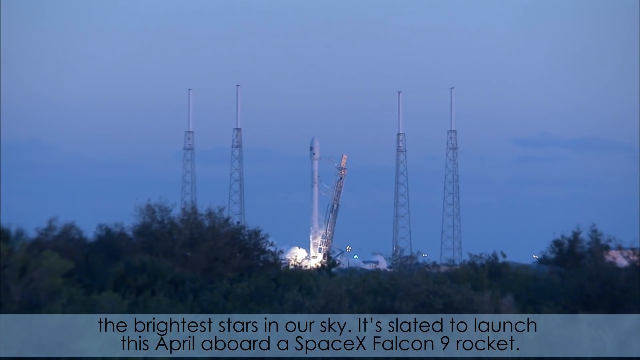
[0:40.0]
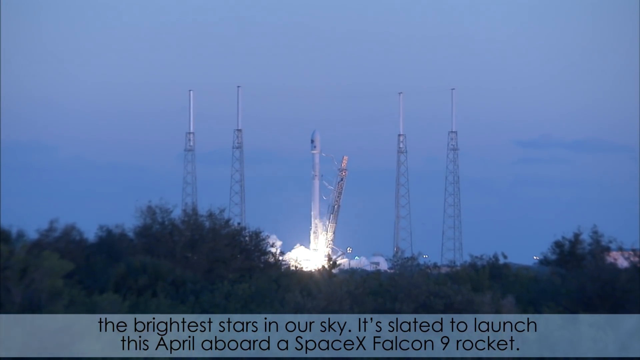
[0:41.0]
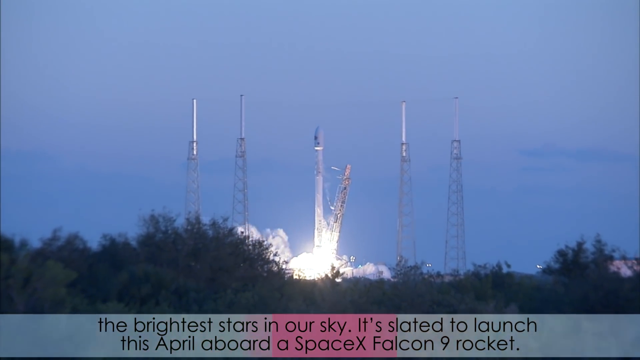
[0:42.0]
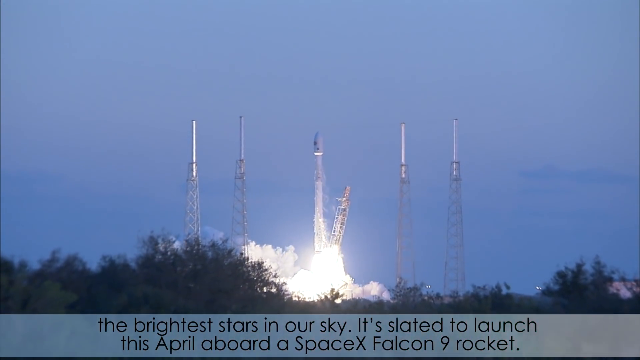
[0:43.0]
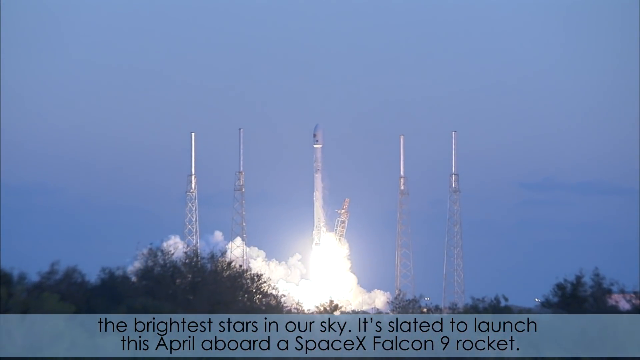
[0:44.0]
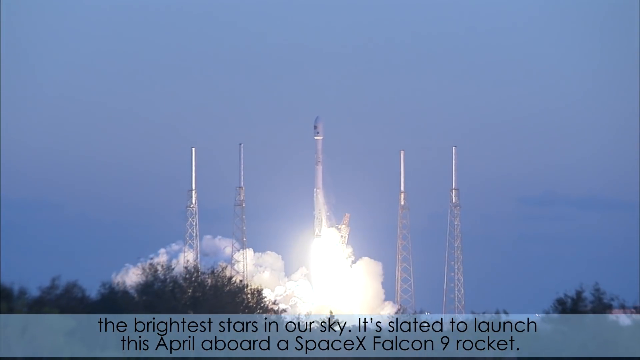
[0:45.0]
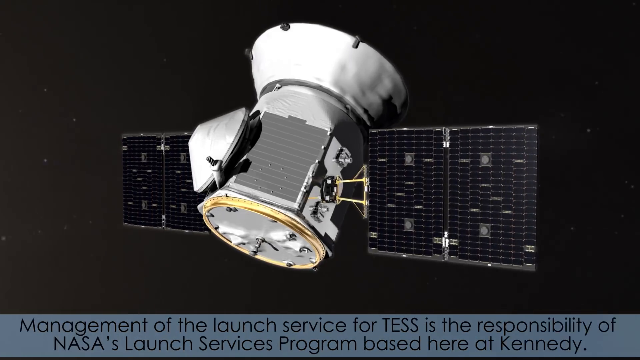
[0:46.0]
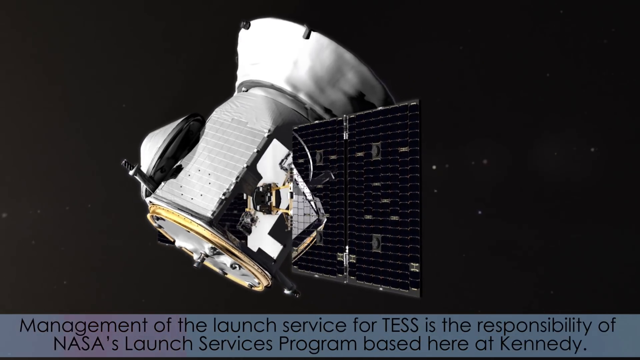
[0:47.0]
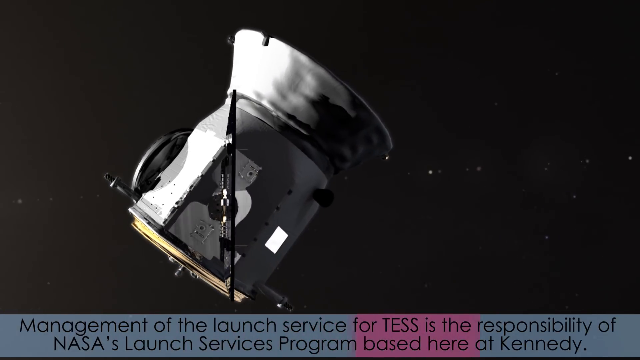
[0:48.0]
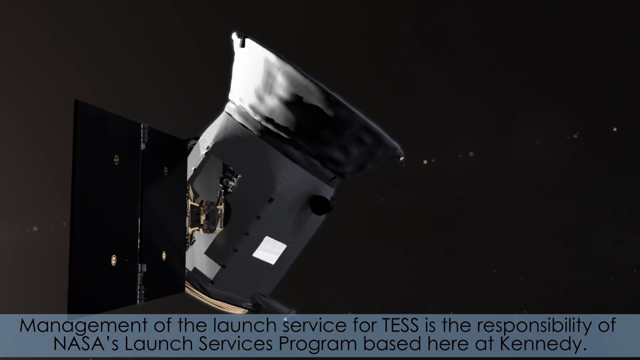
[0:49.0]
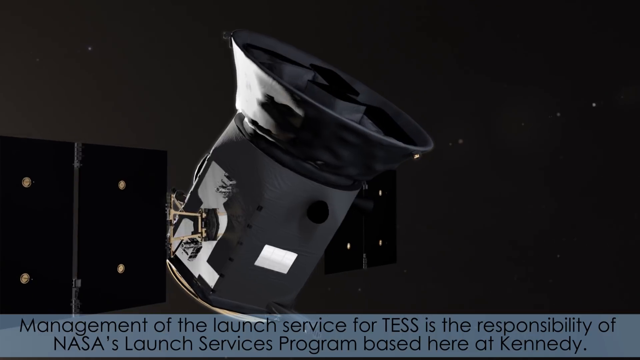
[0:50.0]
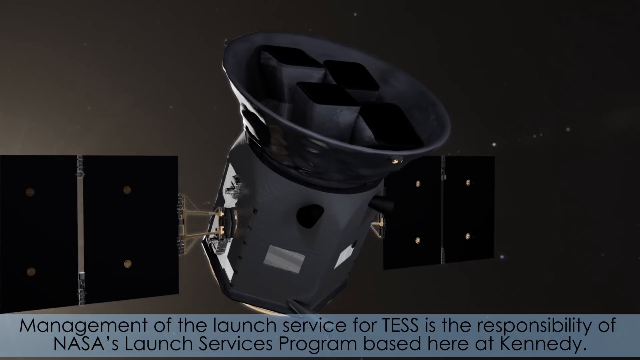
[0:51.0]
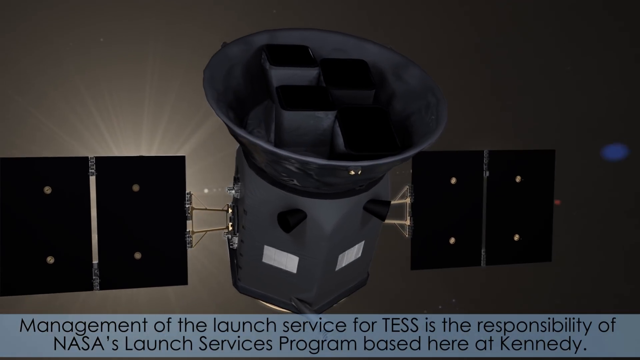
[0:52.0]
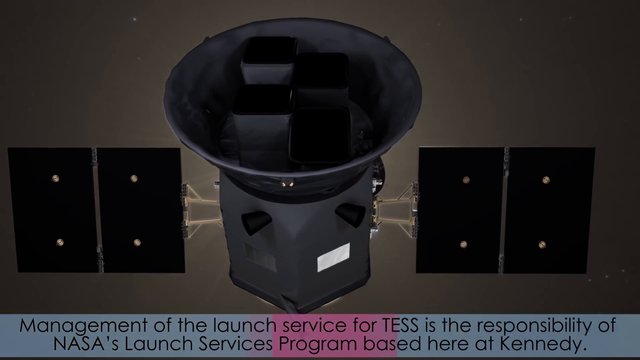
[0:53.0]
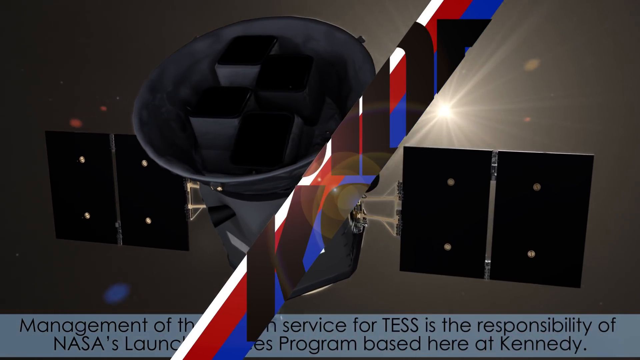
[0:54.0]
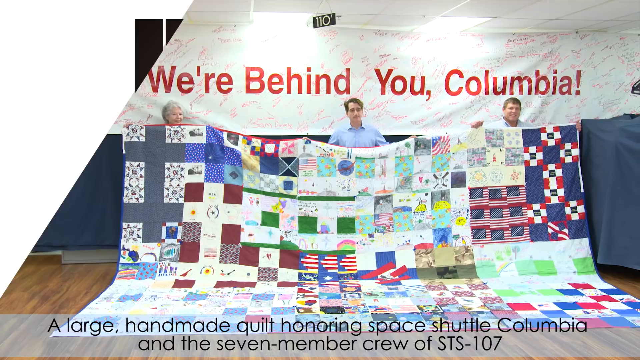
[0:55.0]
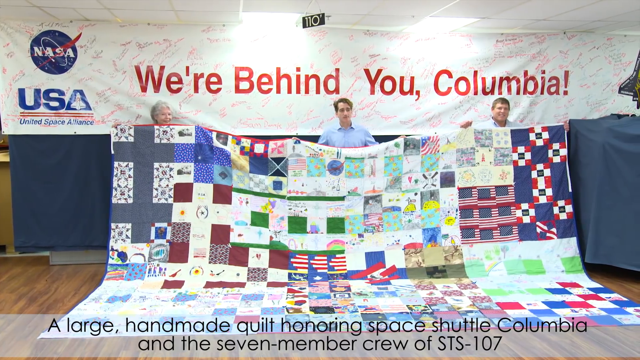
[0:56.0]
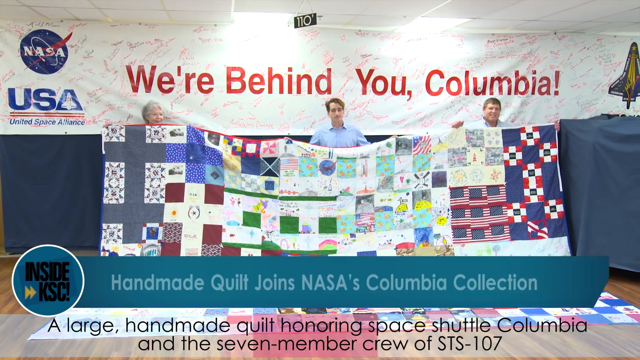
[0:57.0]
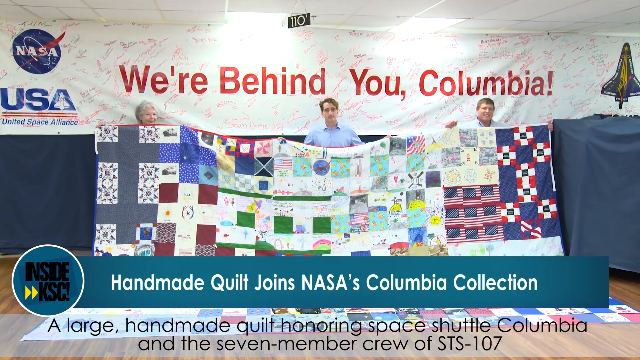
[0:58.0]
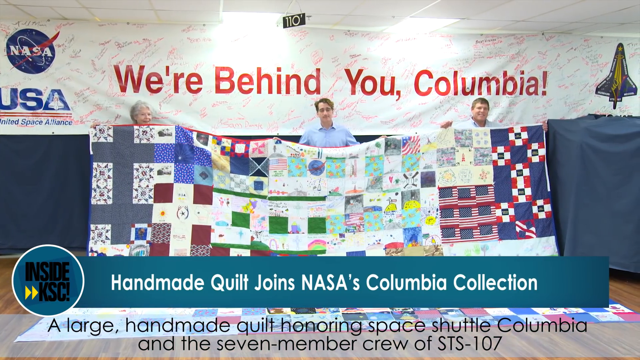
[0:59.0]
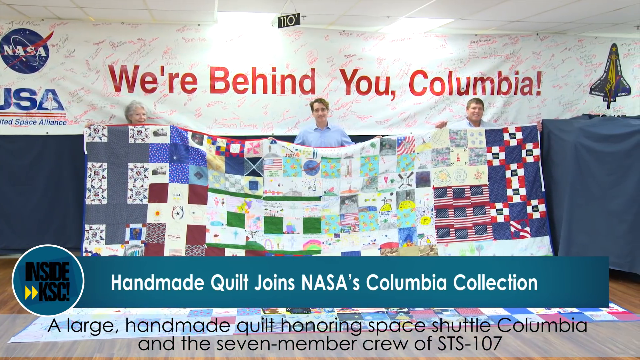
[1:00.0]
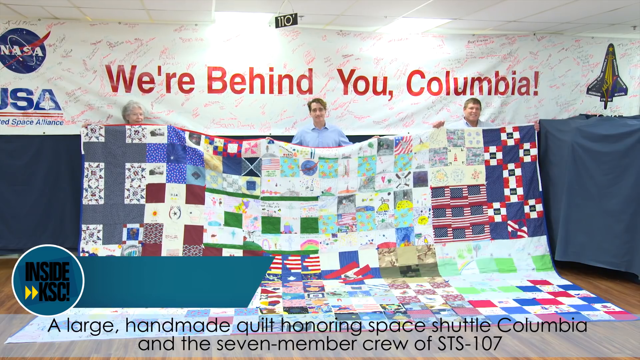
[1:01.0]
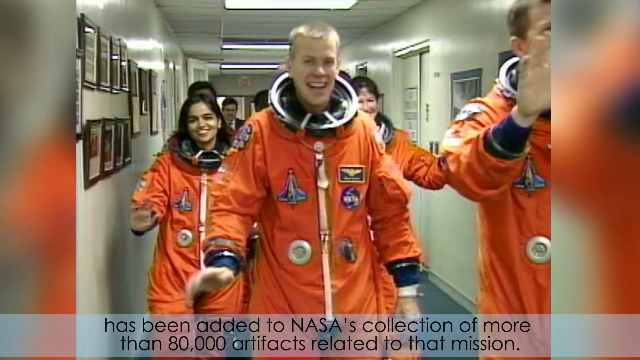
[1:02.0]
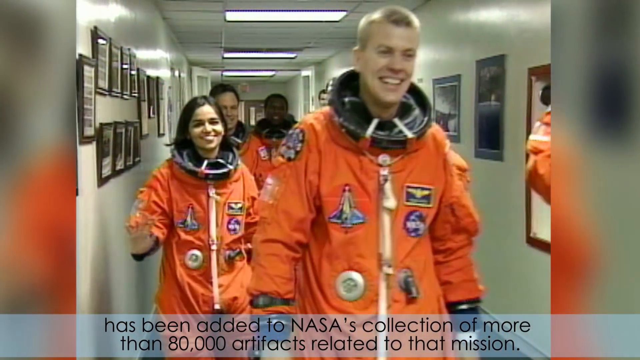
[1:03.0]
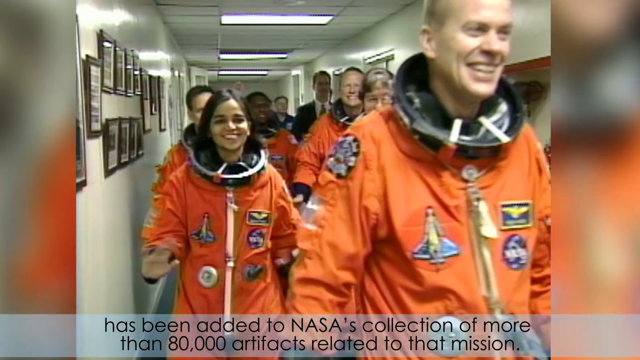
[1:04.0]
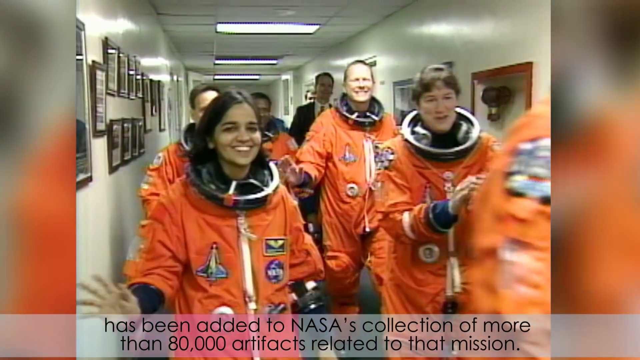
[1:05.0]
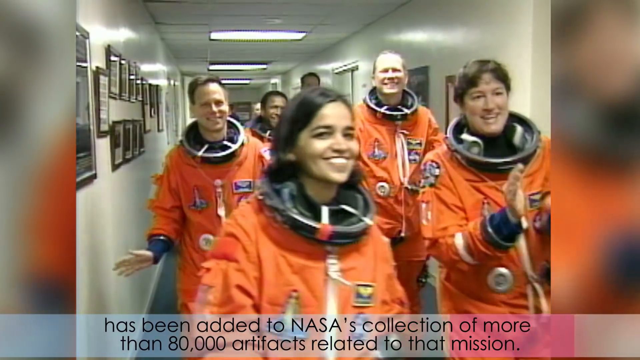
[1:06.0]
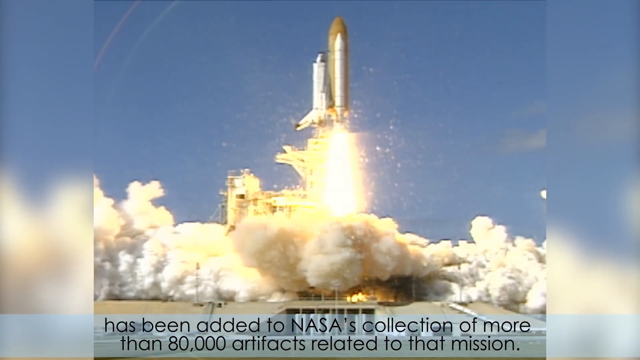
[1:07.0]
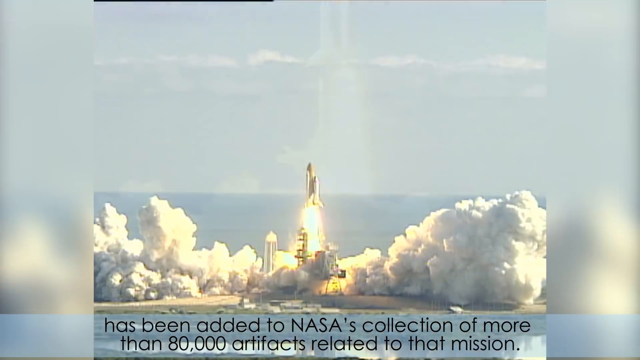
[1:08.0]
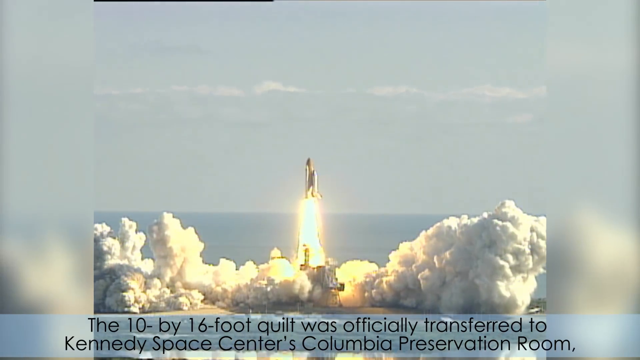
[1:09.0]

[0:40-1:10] A sky landscape shows a tree line with a blue sky above; it is pretty much dusk, about to turn to night. A tall, skinny white rocket is in the center of the screen right above the tree line, with two metal towers on each side of it, two to the left and two to the right, which look black from this distance. The rocket is deploying, with a lot of fire and smoke under it. The screen cuts to a digital image of a satellite in space with a black sky and some stars in the distance. Another cut shows a white screen with black text reading "inside KSC." Then a woman on the left, a man in the center, and a man on the right are holding a giant quilt, and below them a blue text box with white text reads "Handmade Quilt Joins NASA's Columbia Collection." This is followed by B-roll of astronauts in orange astronaut suits and B-roll of another rocket launch.